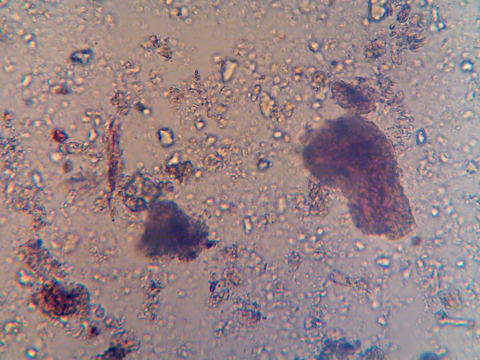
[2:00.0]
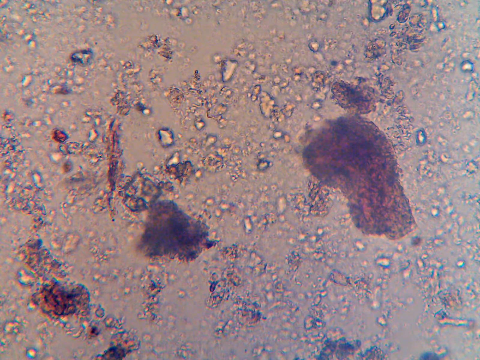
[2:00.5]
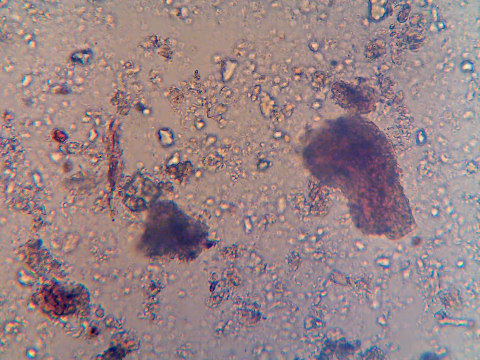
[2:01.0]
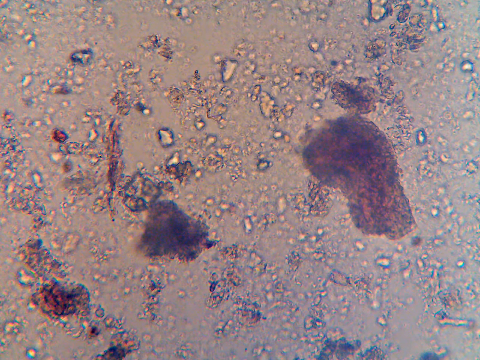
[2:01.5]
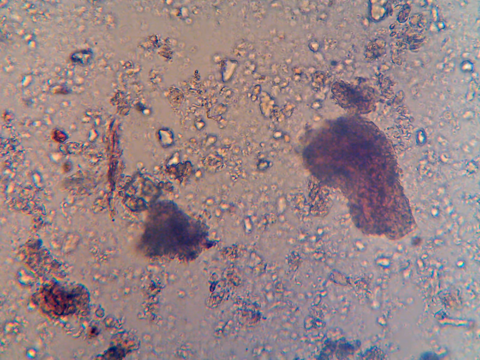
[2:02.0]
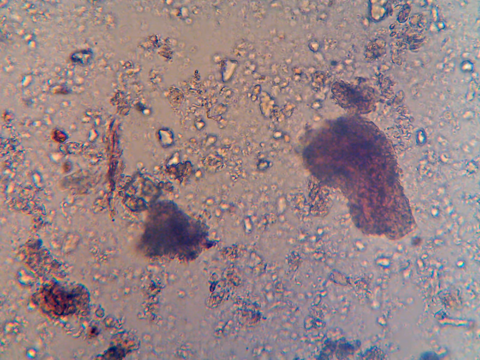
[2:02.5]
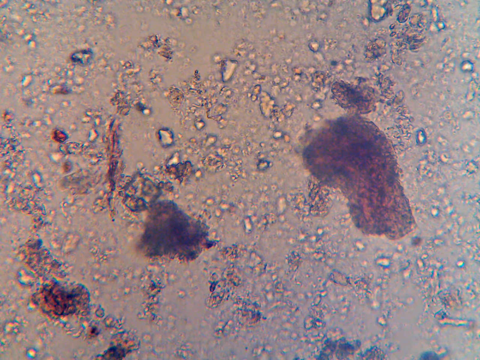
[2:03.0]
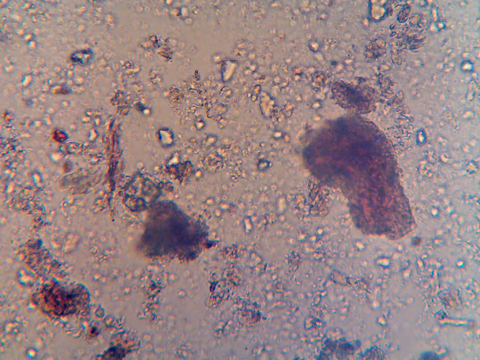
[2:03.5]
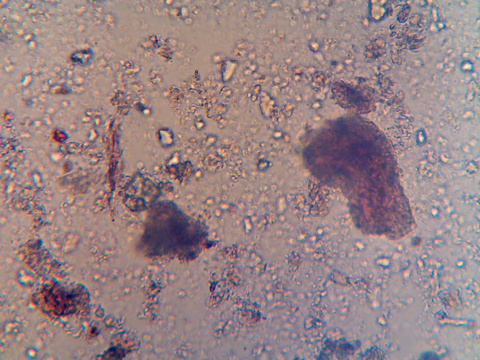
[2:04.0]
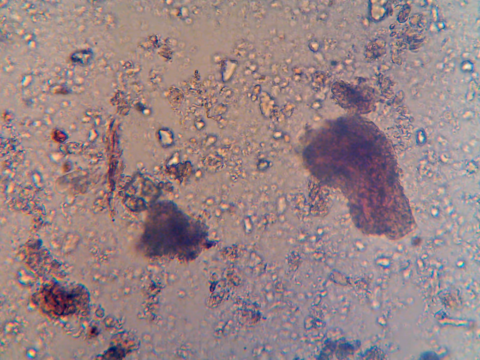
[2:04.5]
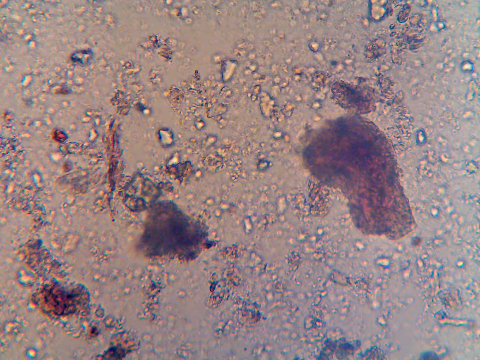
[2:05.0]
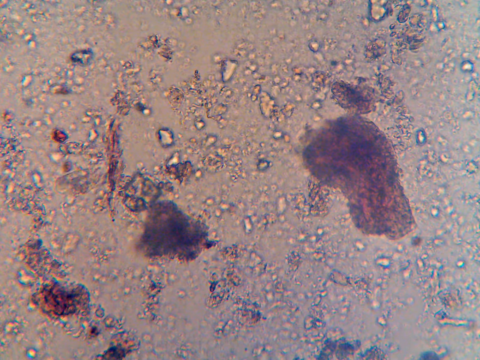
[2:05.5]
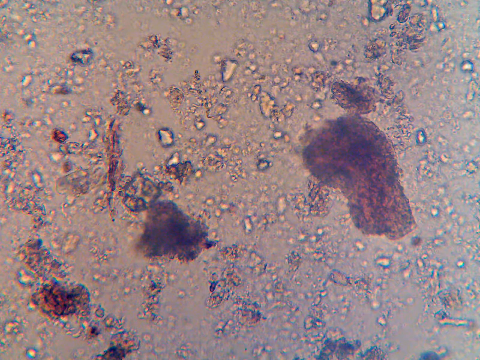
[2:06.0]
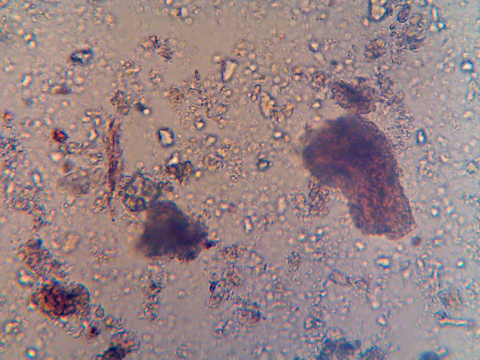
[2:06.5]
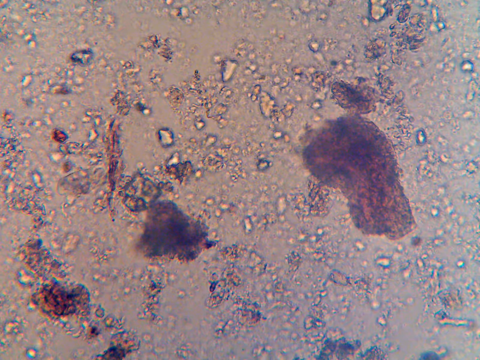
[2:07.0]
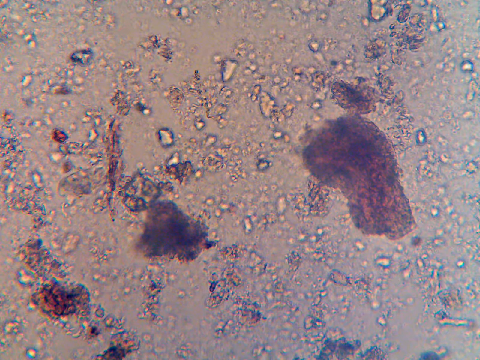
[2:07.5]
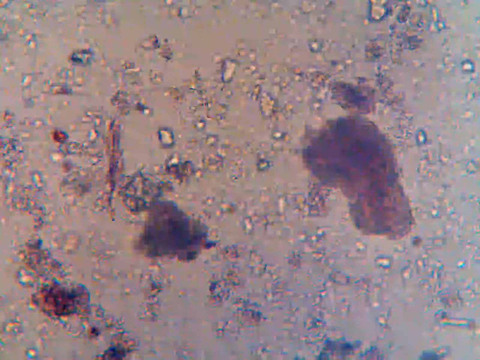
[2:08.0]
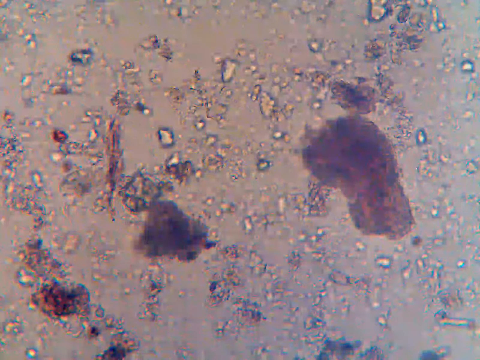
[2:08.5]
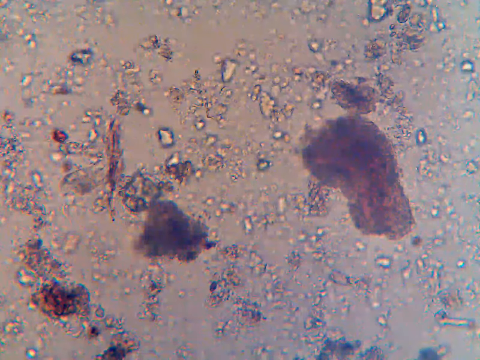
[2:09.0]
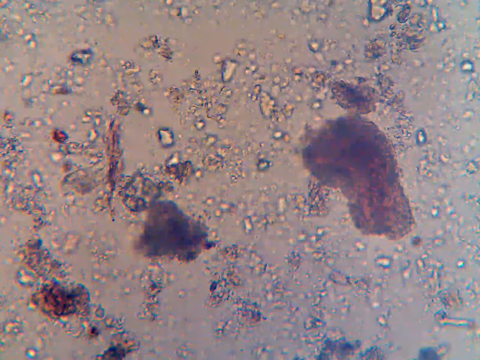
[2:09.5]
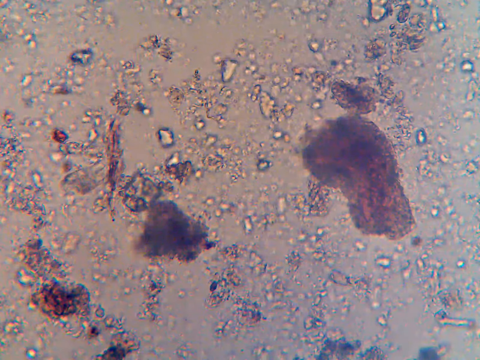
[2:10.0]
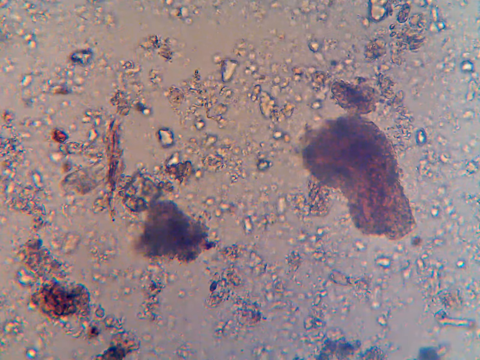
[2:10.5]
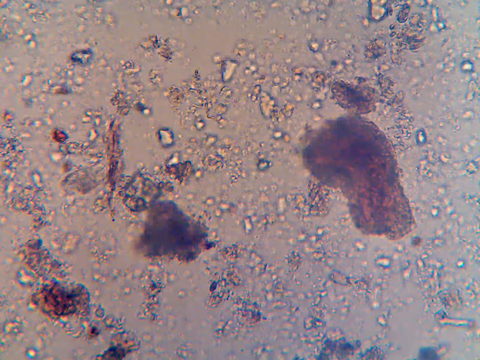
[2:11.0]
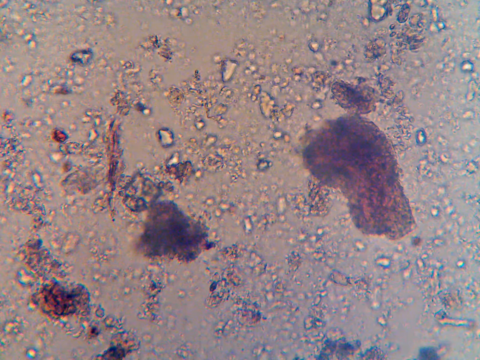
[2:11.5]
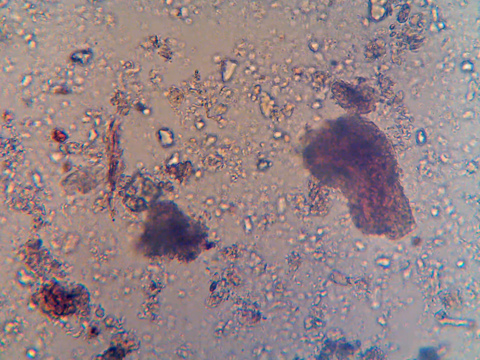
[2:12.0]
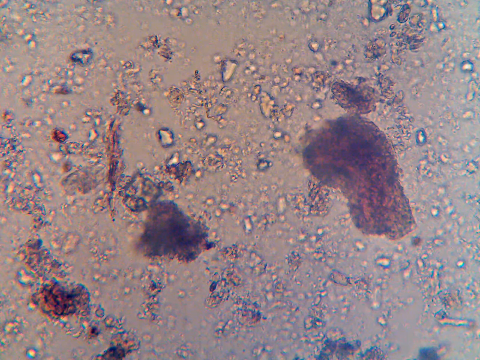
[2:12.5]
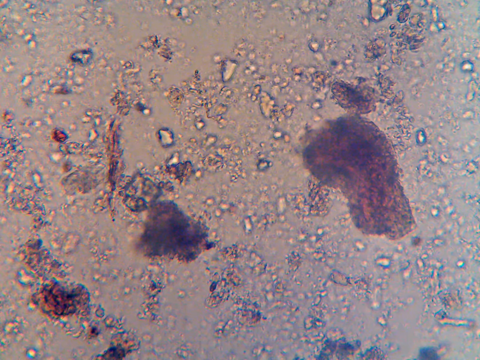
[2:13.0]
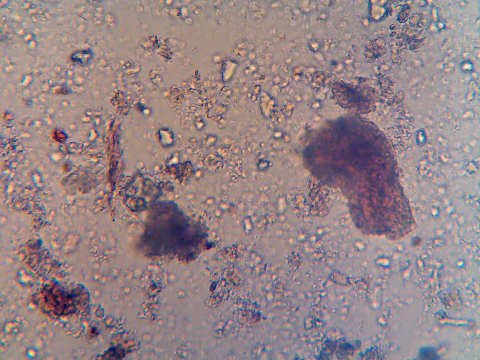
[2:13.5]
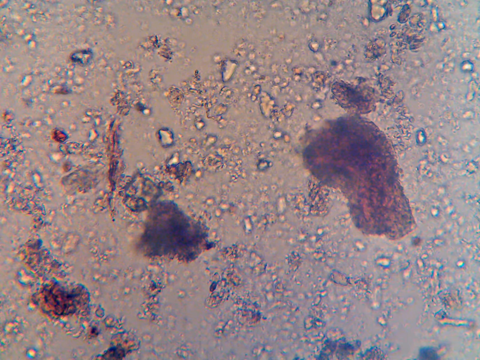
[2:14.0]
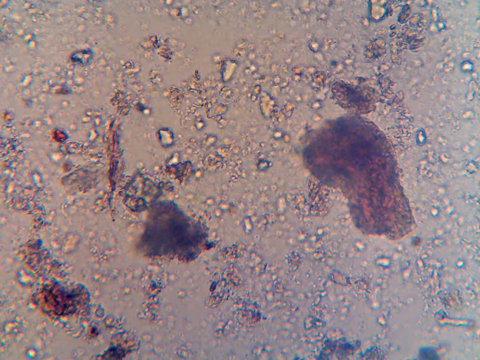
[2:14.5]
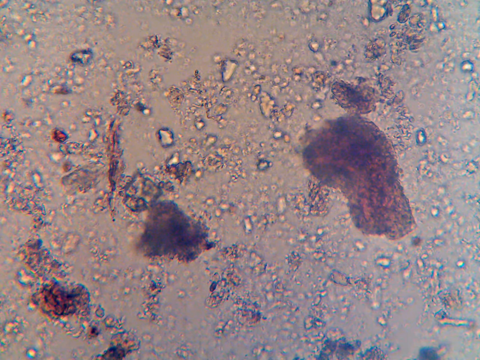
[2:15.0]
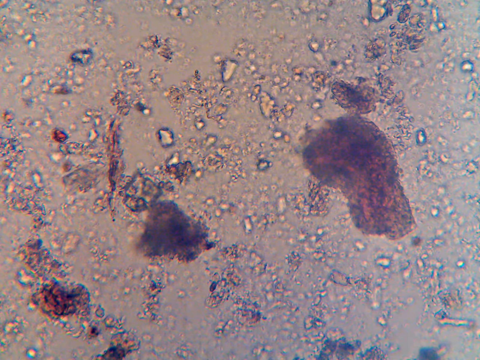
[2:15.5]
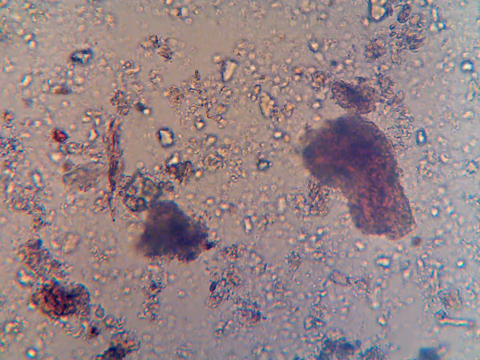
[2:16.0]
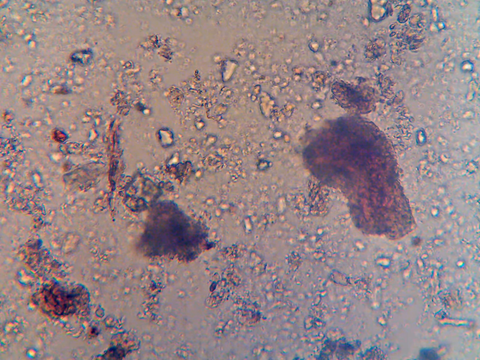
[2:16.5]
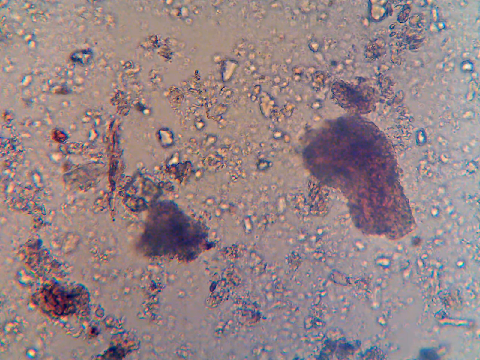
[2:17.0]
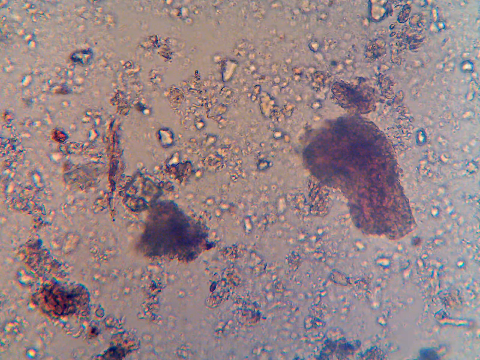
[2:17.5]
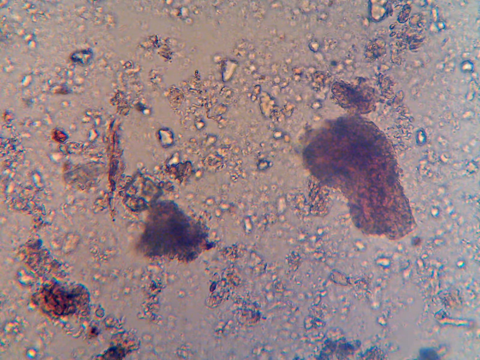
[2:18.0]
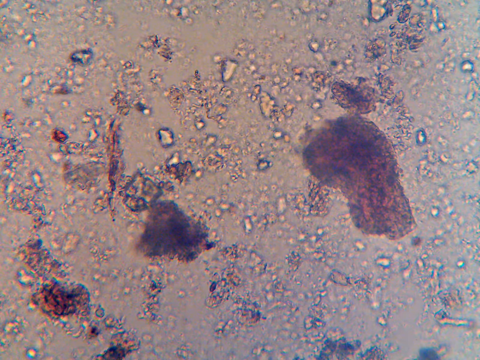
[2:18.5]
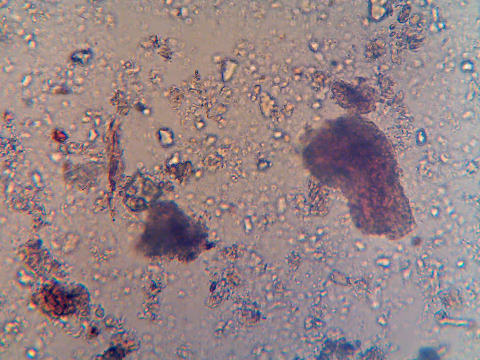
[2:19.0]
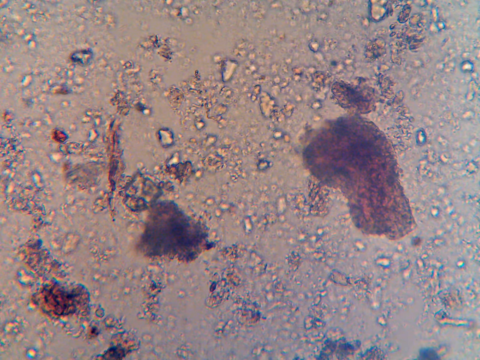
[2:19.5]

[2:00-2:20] What is apparently electronic microscope footage shows no words on screen. There is a brown-beige background with what look like bubbles or little blobs in colors very close to but slightly off from the background, with a slightly darker area around each circle that makes them stand out. Three areas with larger blobs are noticeably different in color and shape; they are not round, and they do not move. For the most part everything looks unmoving, but the image gets blurry and unblurry at times, and an area of blurriness in the center-left might look like it is moving, though it is unclear whether it really is.